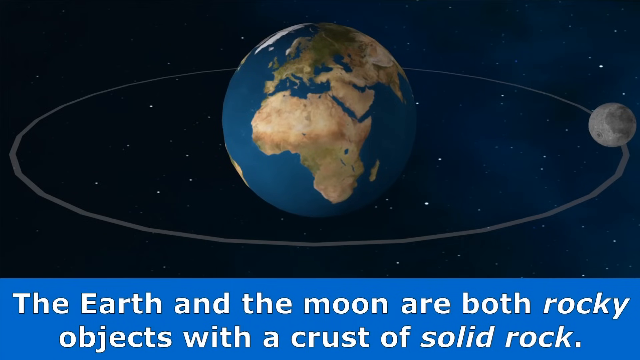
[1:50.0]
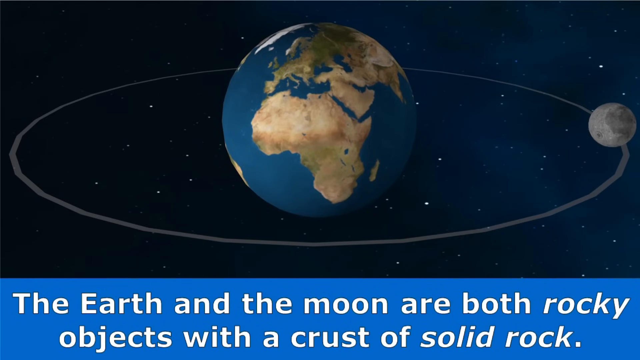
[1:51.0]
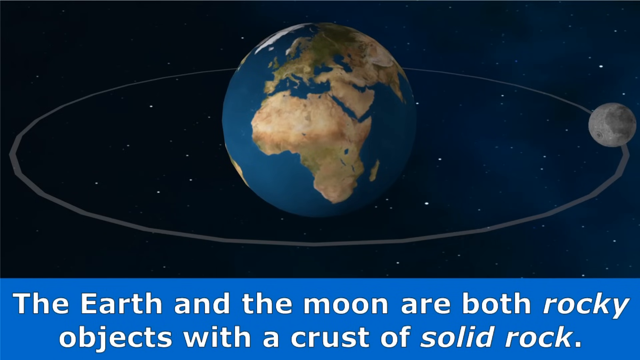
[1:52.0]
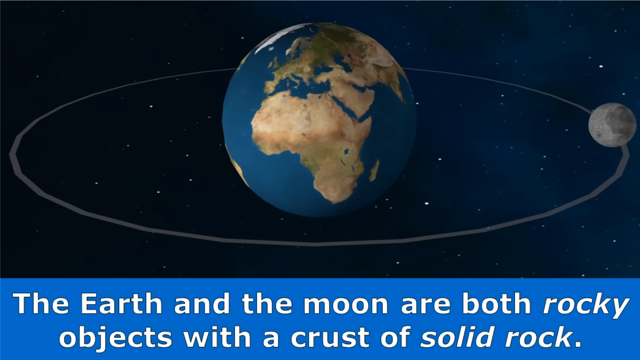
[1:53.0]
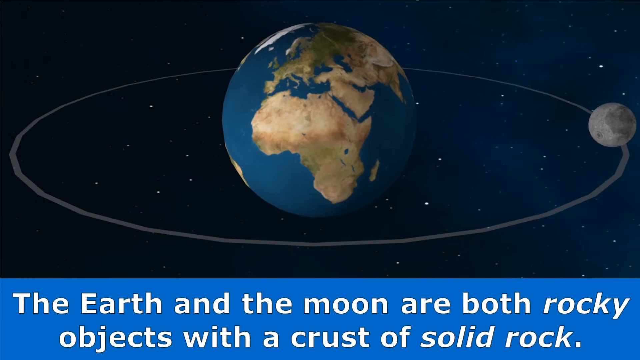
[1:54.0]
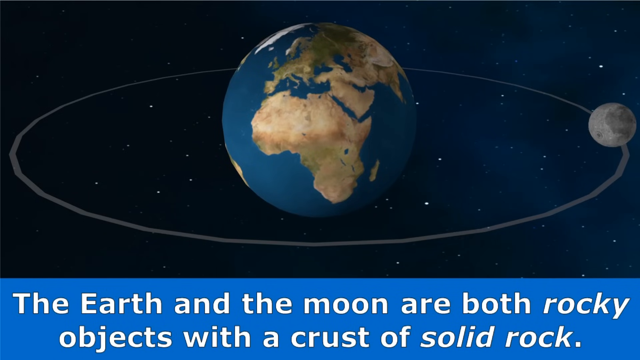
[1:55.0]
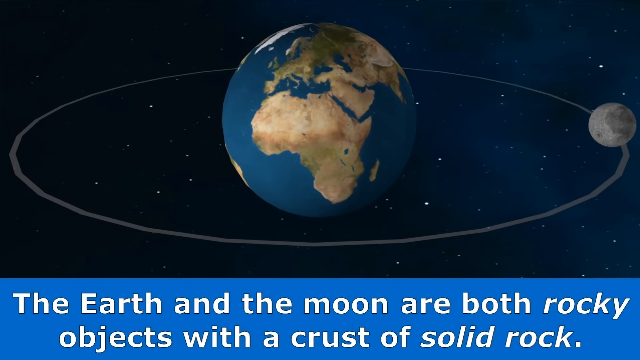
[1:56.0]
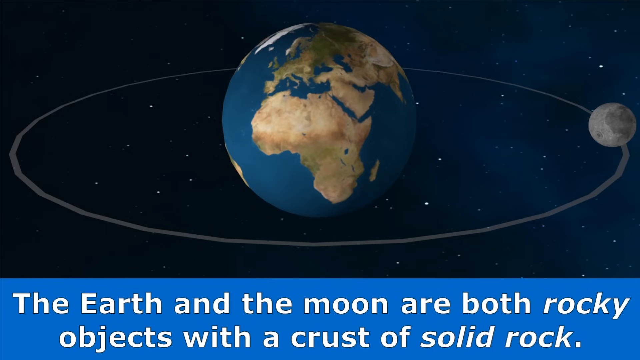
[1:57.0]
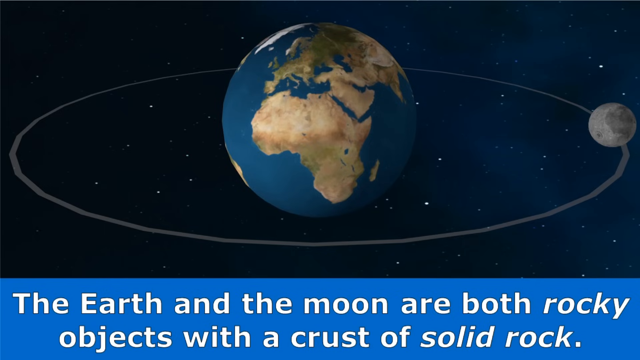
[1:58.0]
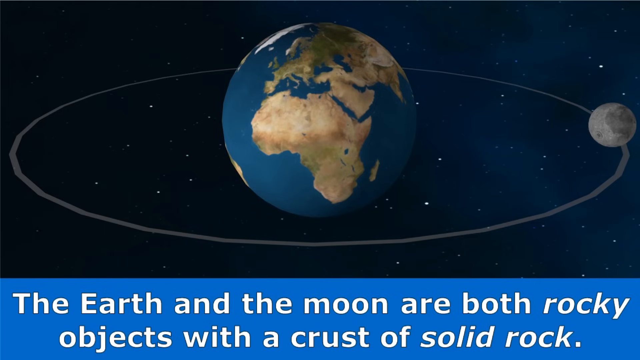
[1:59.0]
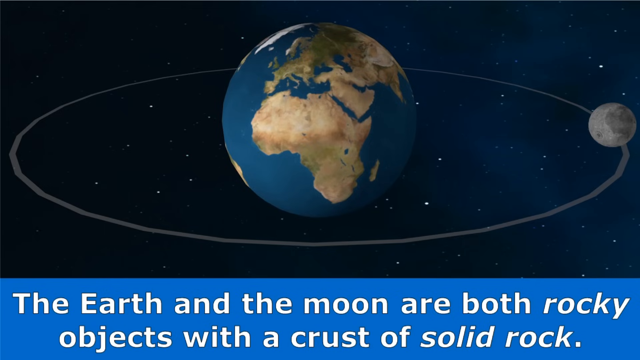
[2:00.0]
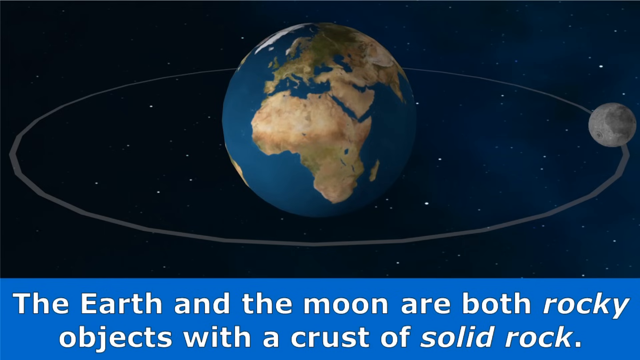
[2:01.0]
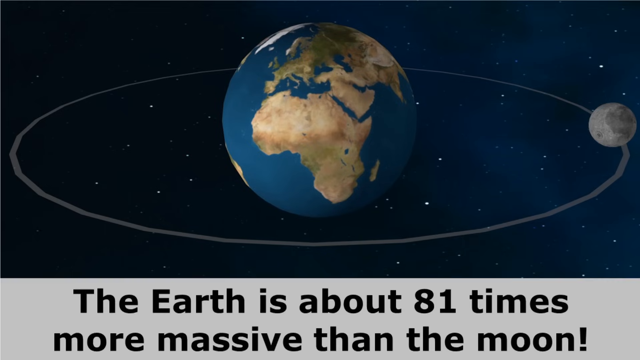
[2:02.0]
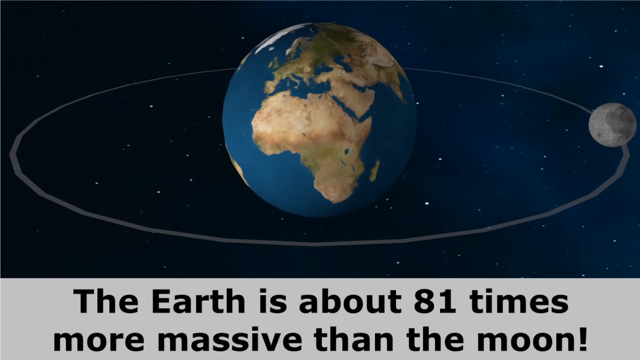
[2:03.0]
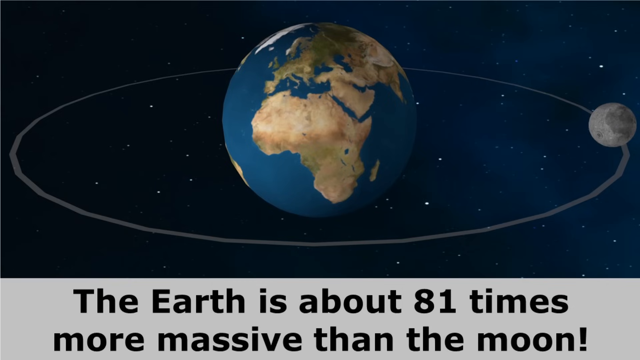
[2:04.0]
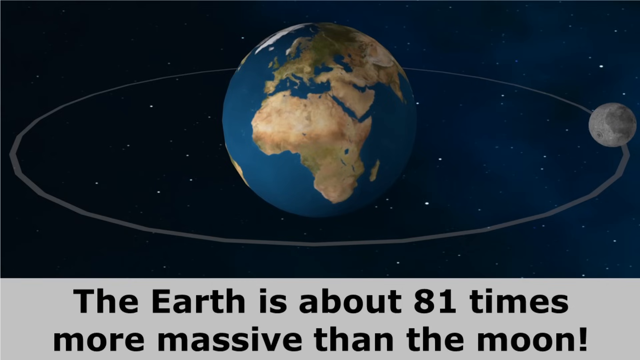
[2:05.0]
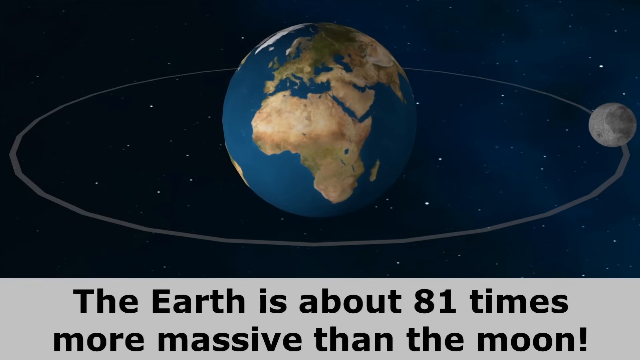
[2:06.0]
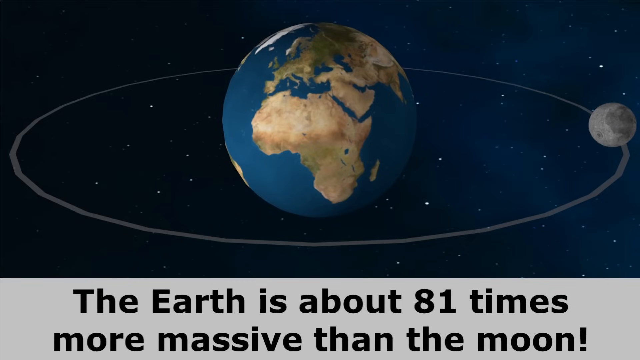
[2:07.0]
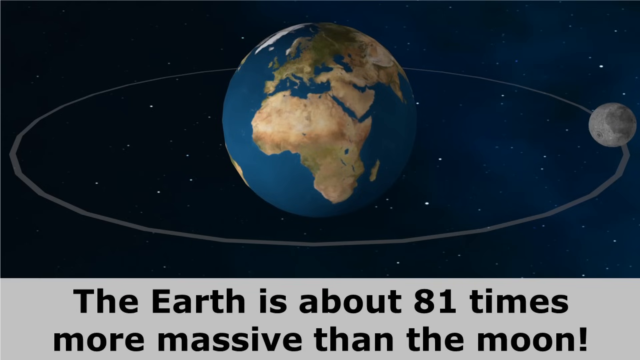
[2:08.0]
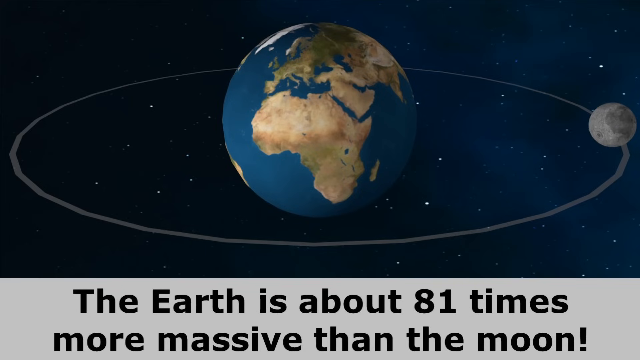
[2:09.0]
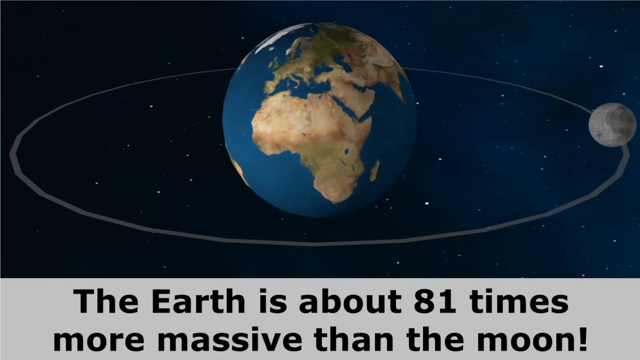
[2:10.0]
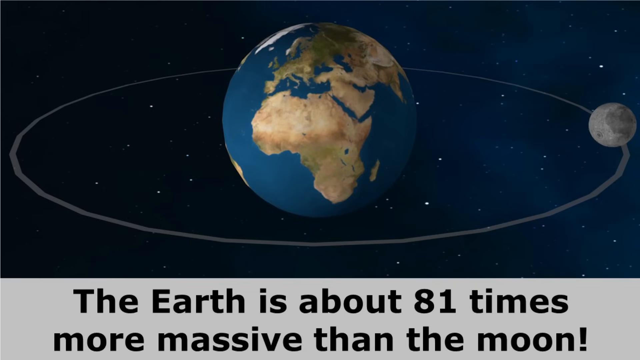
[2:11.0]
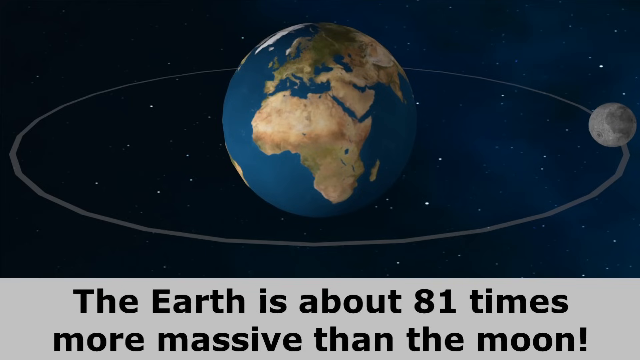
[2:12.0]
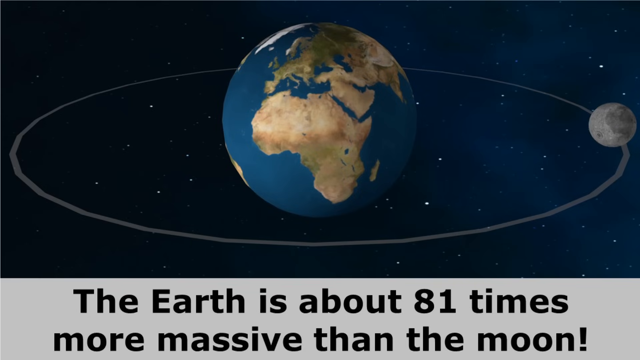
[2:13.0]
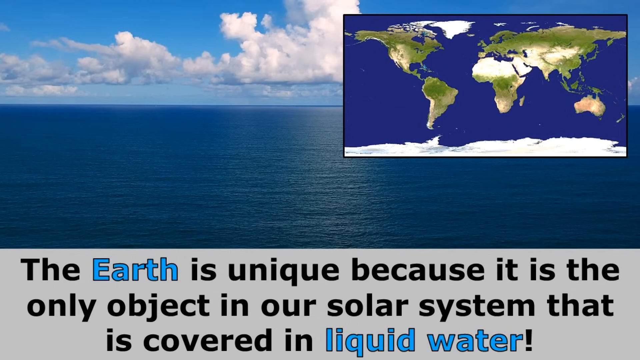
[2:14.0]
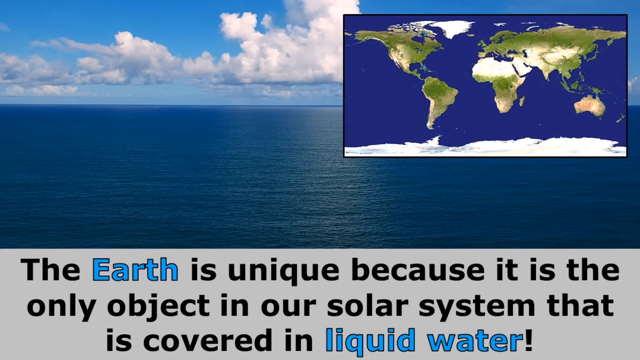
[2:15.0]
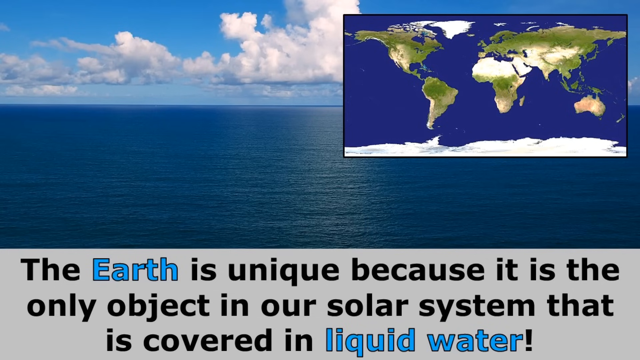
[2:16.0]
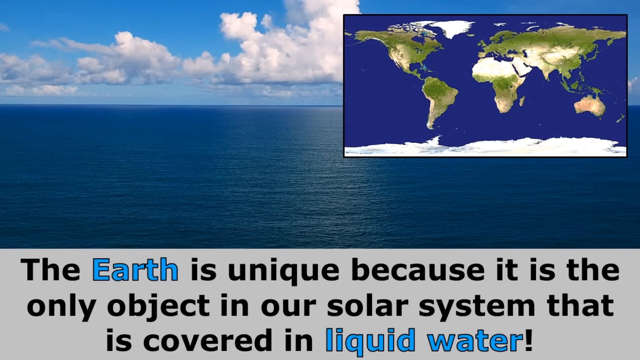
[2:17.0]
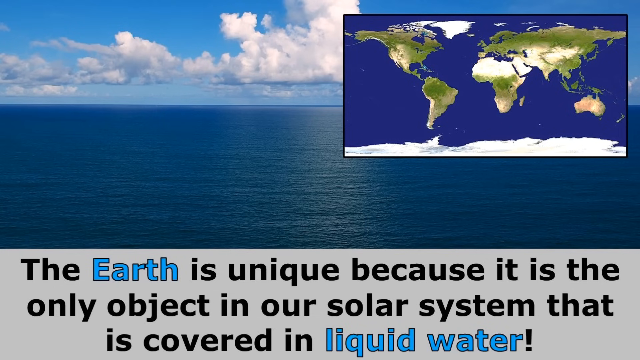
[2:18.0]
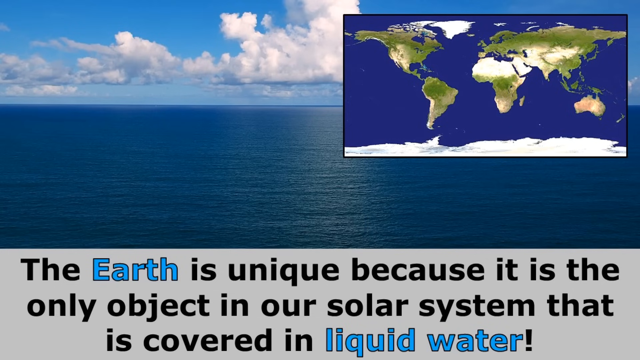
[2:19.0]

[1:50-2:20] The presentation continues with white text at the bottom on a dark blue horizontal background reading "the Earth and the Moon are both rocky objects with a crust of solid rock." In the middle of the screen are a 3D model of the Earth and a 3D model of the Moon, positioned as if orbiting, though nothing actually moves. The bottom text switches to "the Earth is about 81 times more massive than the Moon," and then to "the Earth is unique because it is the only object in our solar system that is covered in liquid water." This picture shows a big 3D-generated ocean.